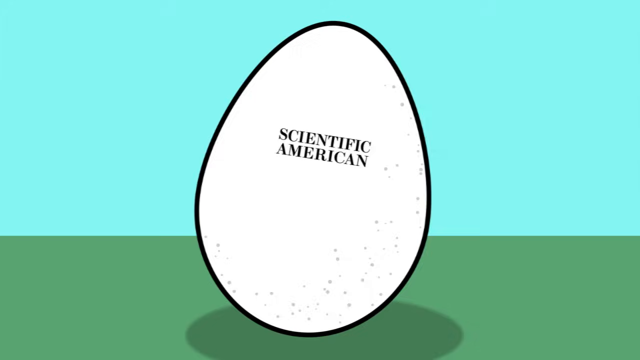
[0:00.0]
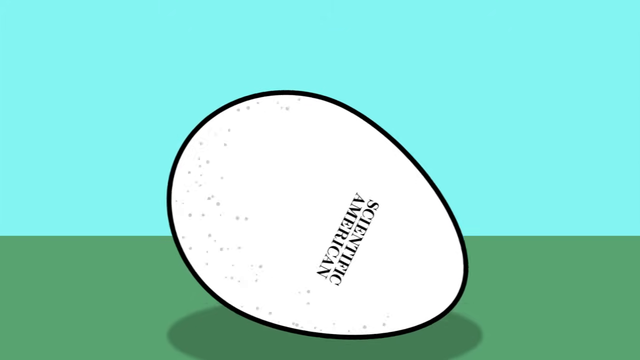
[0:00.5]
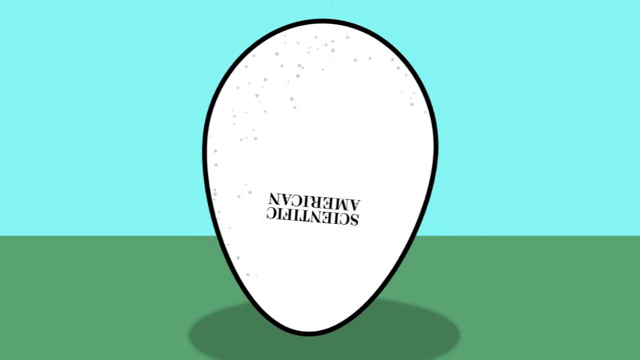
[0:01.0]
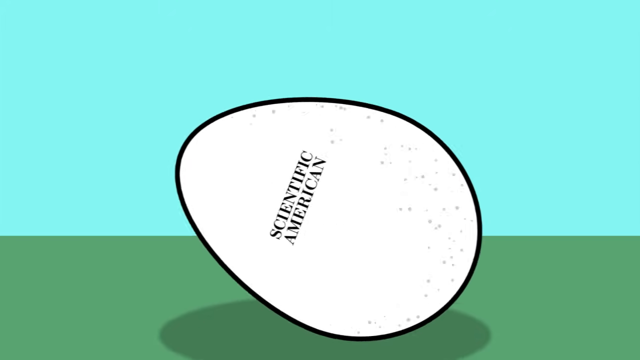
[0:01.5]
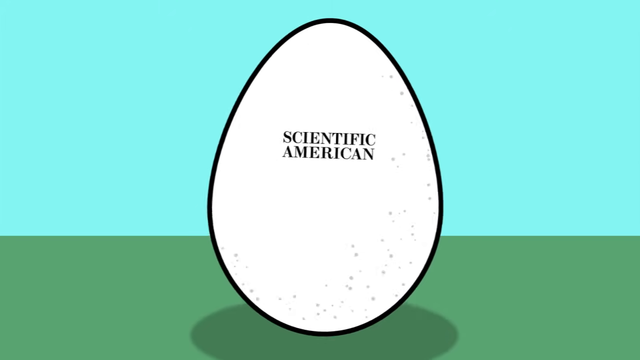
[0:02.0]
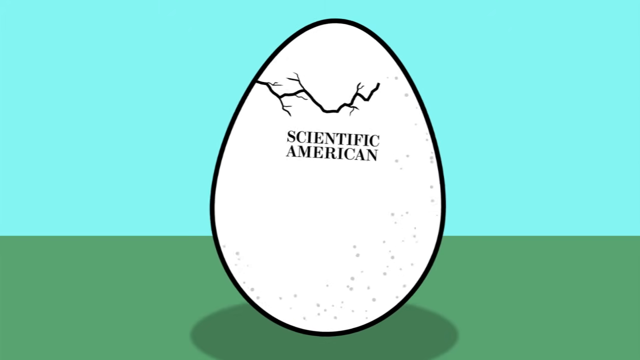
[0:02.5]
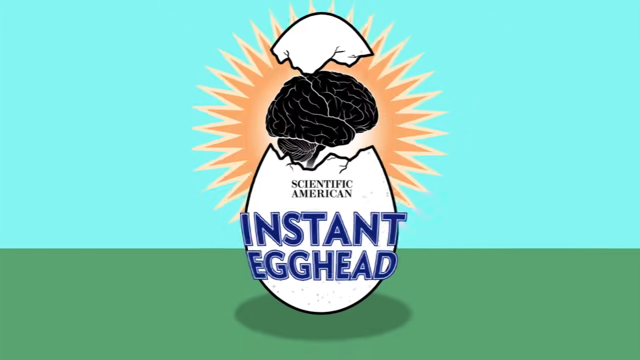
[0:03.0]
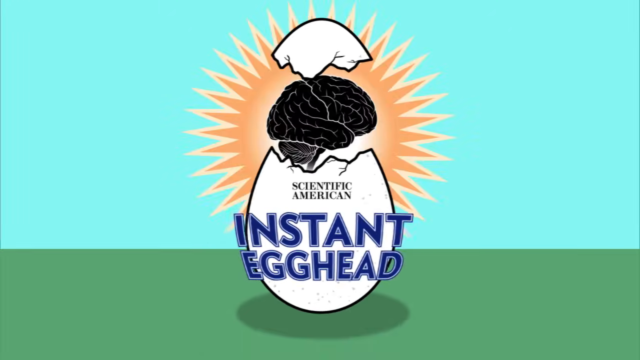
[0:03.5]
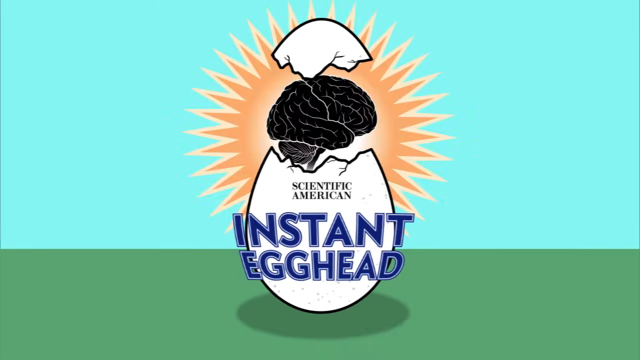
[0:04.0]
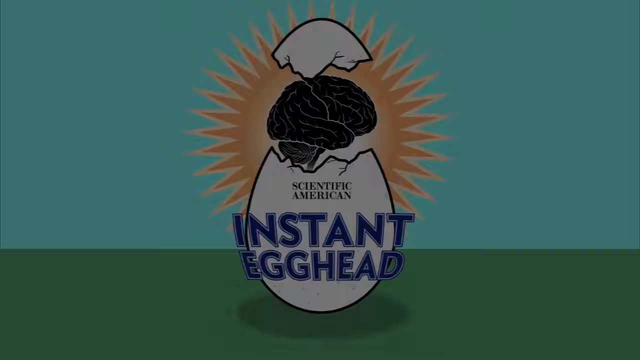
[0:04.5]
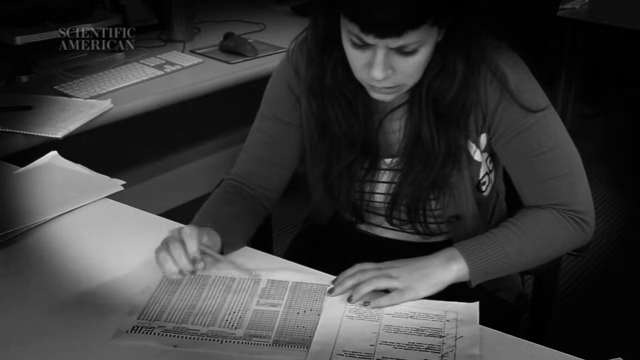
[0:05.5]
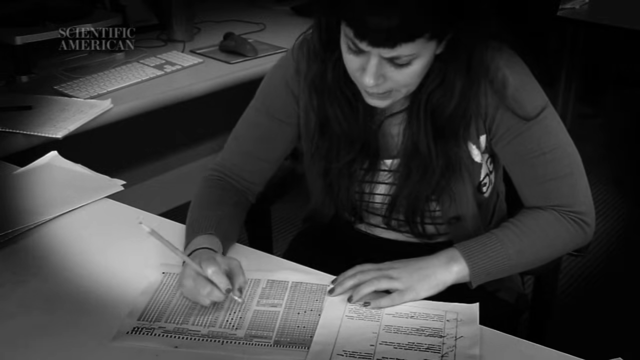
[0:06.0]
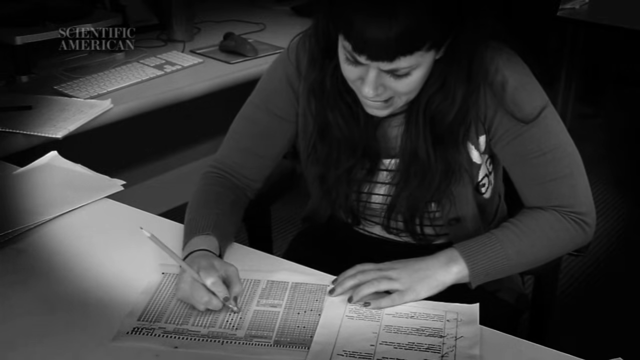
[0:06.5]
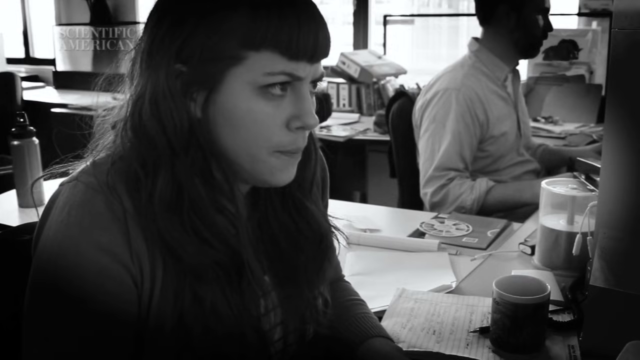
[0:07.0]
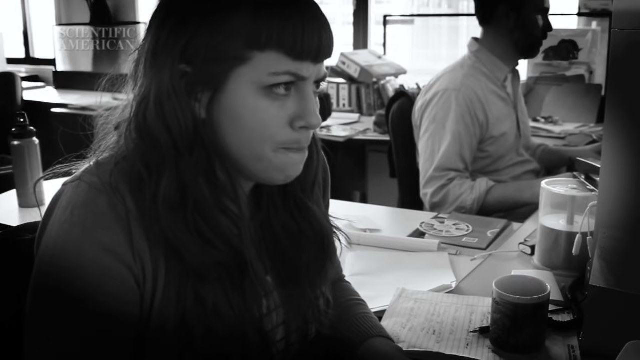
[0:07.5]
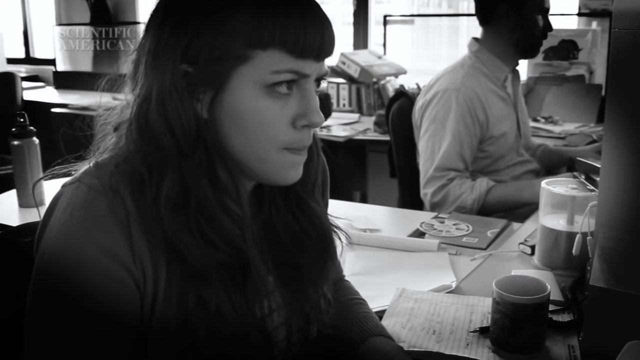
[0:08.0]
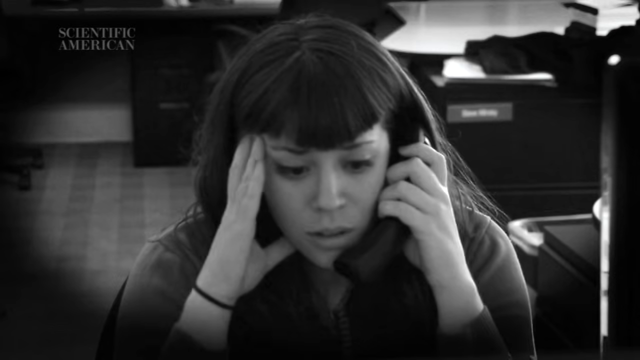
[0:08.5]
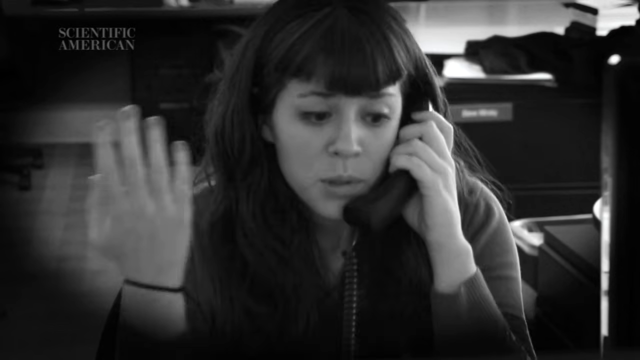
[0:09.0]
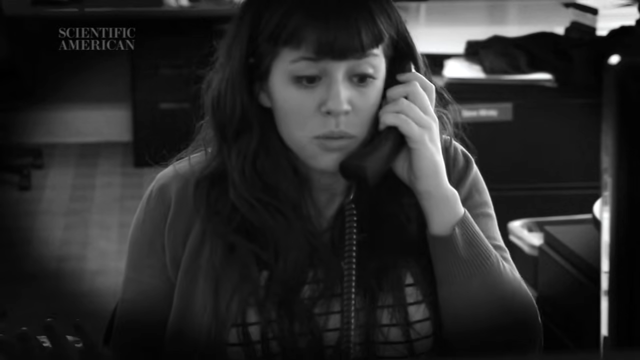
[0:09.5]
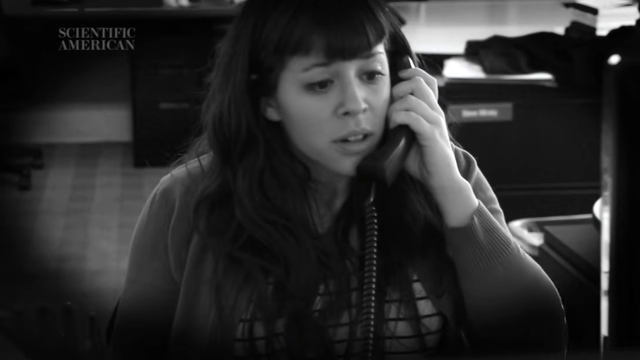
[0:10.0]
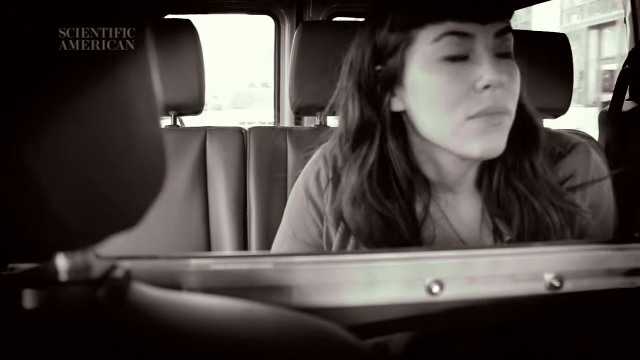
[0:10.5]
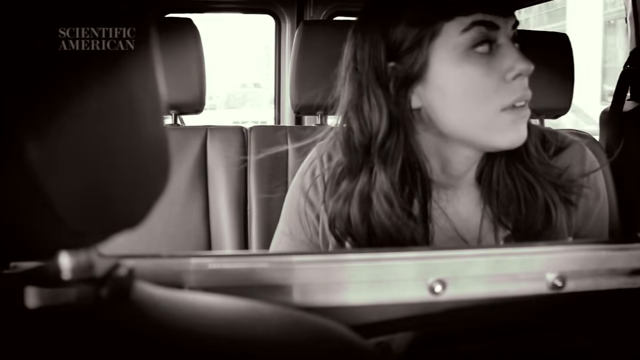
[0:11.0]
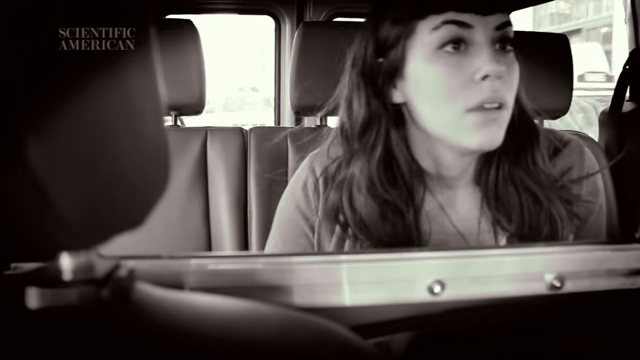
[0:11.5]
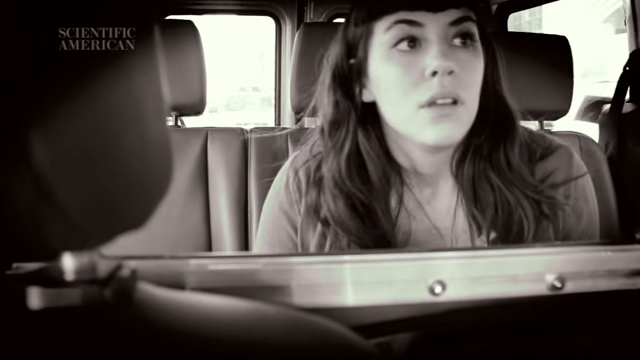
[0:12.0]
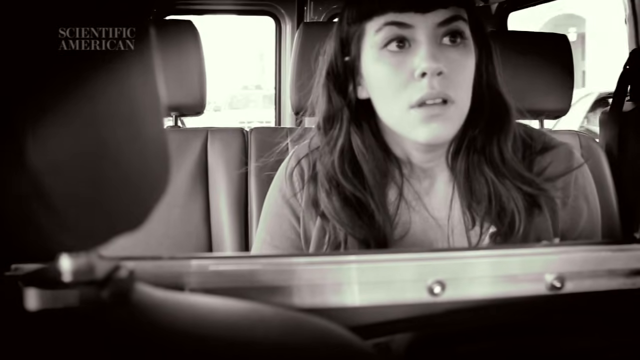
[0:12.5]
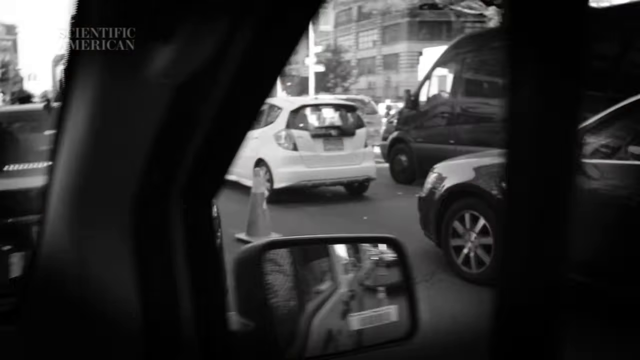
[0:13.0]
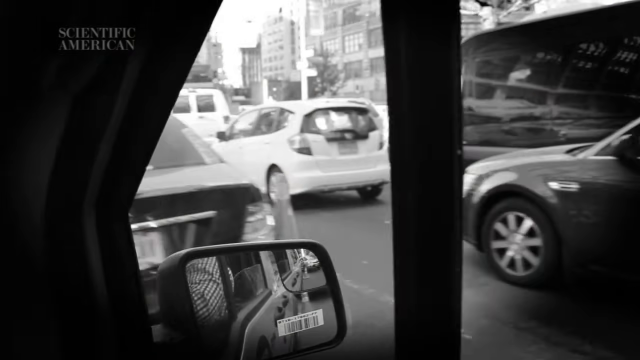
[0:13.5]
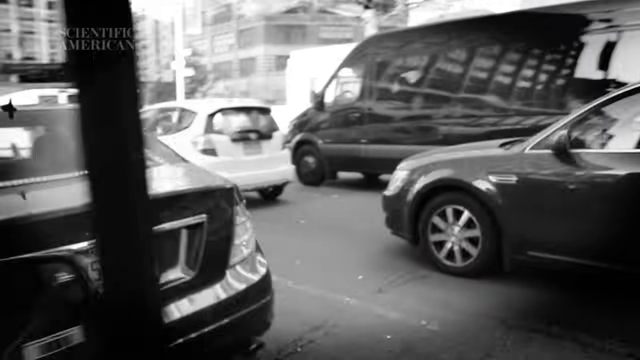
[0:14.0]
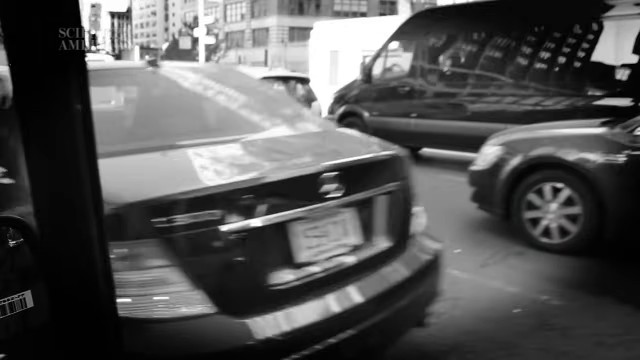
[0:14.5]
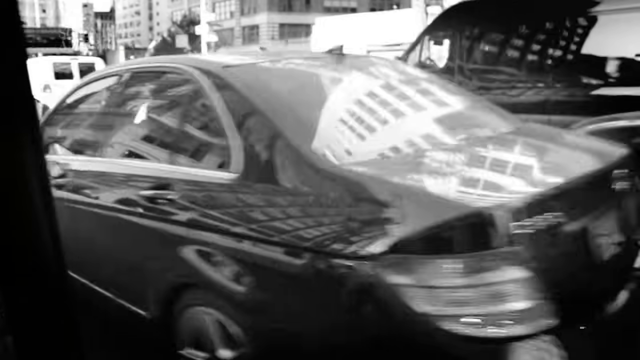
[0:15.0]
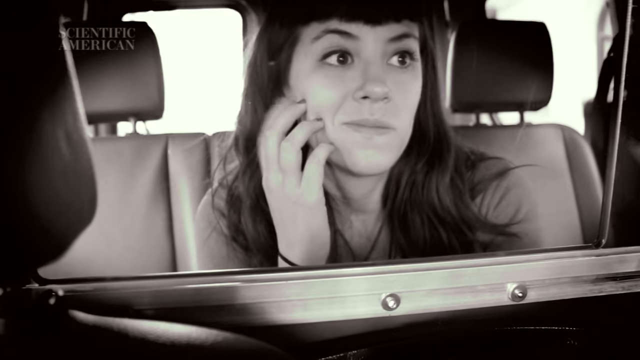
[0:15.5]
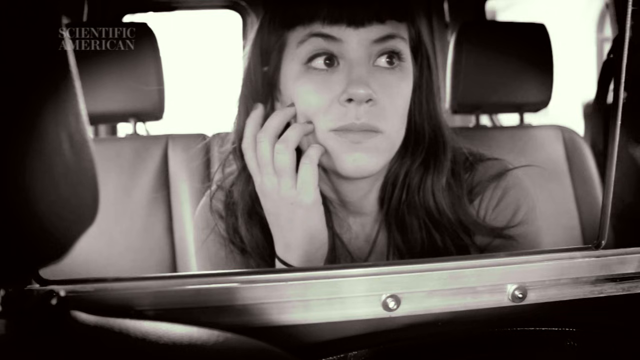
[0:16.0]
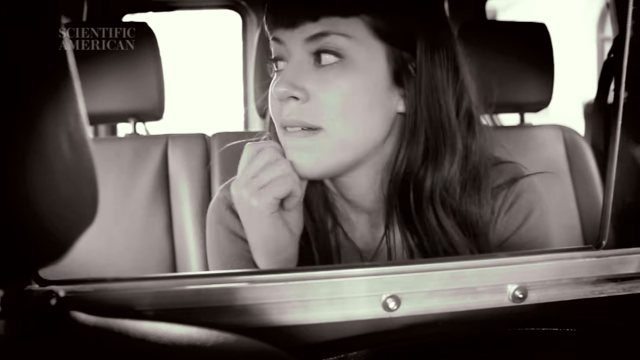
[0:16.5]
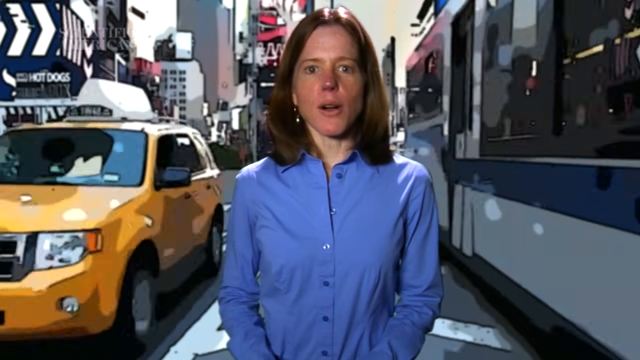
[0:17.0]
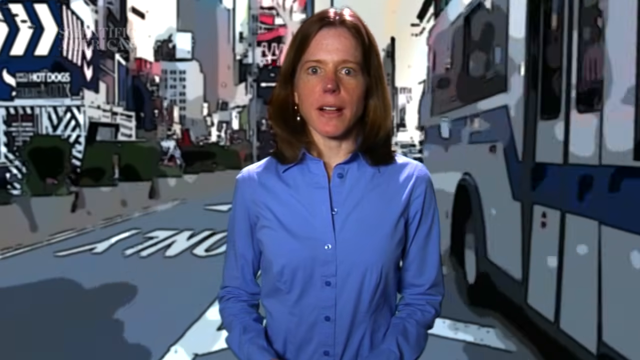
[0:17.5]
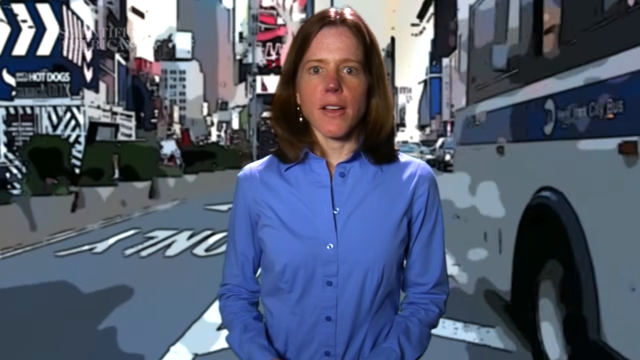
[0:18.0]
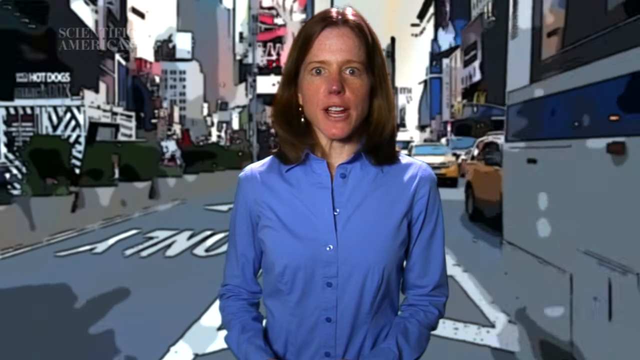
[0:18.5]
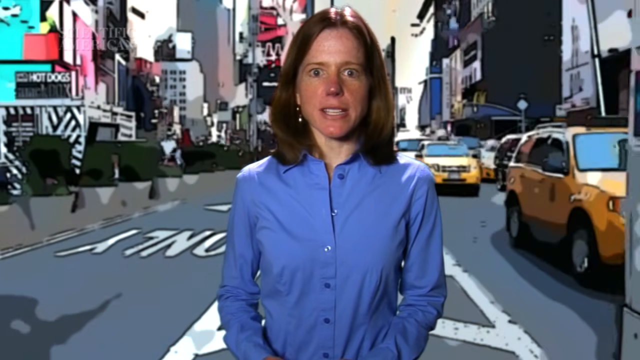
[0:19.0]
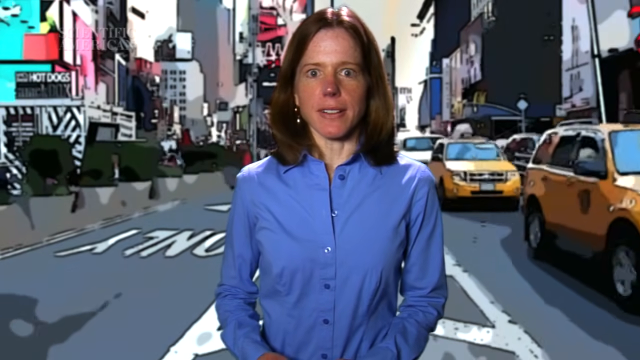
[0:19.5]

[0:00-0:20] The video begins with a drawn egg rolling to the right over a green surface that appears to be grass, against a background that is possibly an aqua-colored sky, with the words "Scientific American" written inside it. The egg cracks, the cracked top rises, and a sun is behind it. A brain extends from inside the cracked egg, and the words "instant egghead" appear across the widest part of the egg. The video transitions to an office, shown in black and white: a close-up of a woman with frustration on her face as she taps the eraser of her pencil on a piece of paper. She is at a desk with a keyboard, computer monitor, mouse and mouse pad. She has long brown hair and wears a sweater and a striped top. Next comes a profile of her, again frustrated; next to her is another desk, and a man is sitting at that desk. The woman is then on the phone, still frustrated. The video transitions to her in a taxi cab, where she appears to be in a rush, looking everywhere while traffic is very crowded, and she taps on her cheek. Then a color image shows a woman standing in the street in the middle of Times Square, New York, as taxicabs and cars rush past.